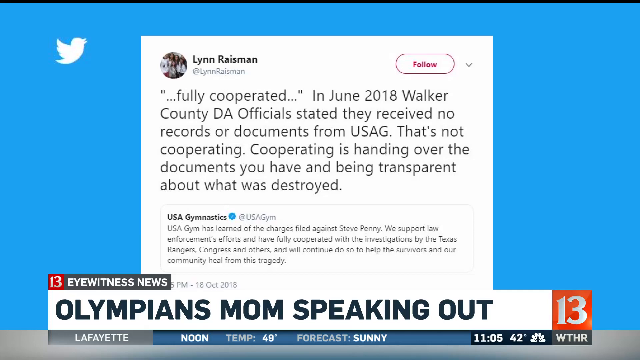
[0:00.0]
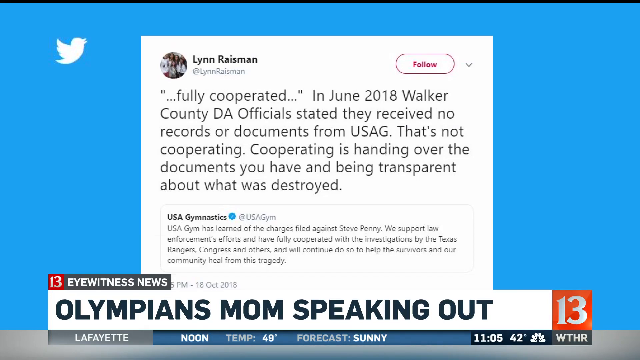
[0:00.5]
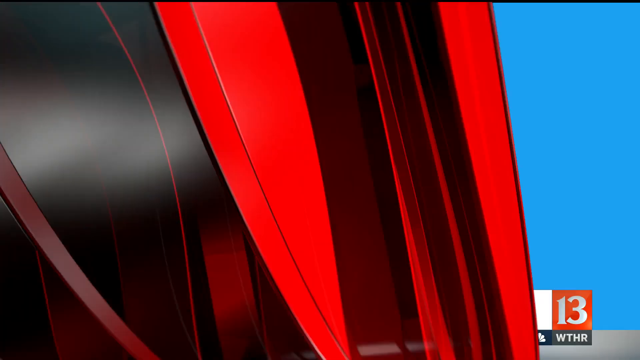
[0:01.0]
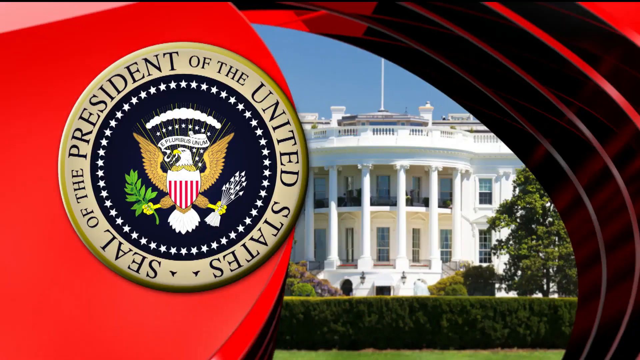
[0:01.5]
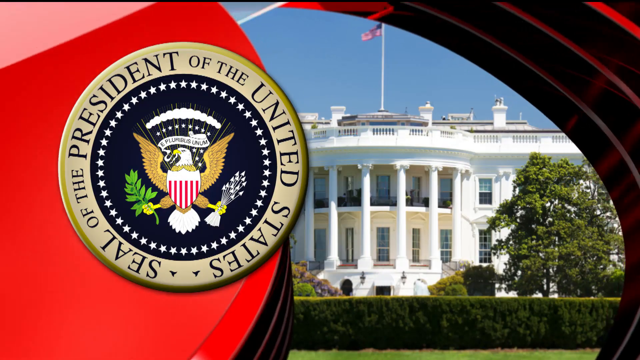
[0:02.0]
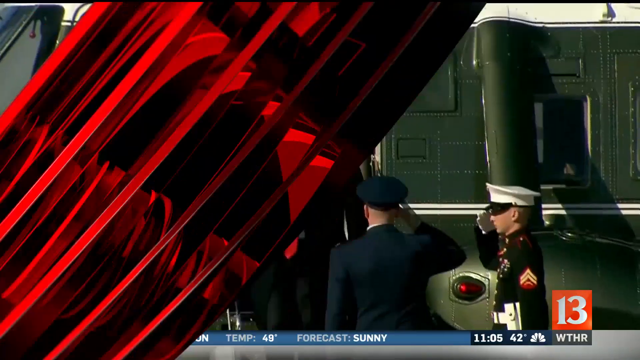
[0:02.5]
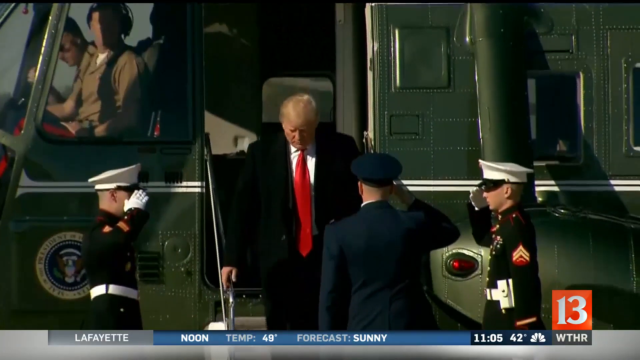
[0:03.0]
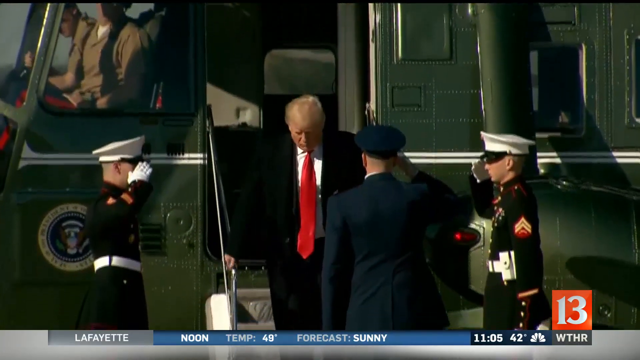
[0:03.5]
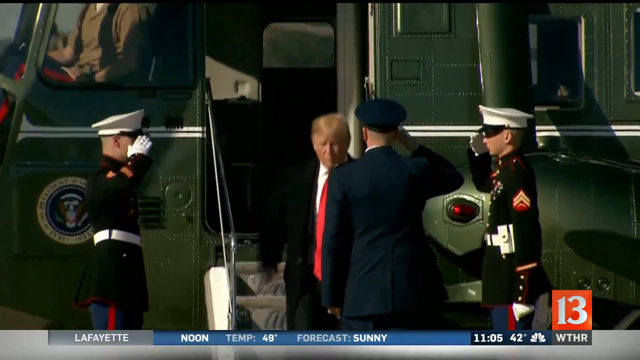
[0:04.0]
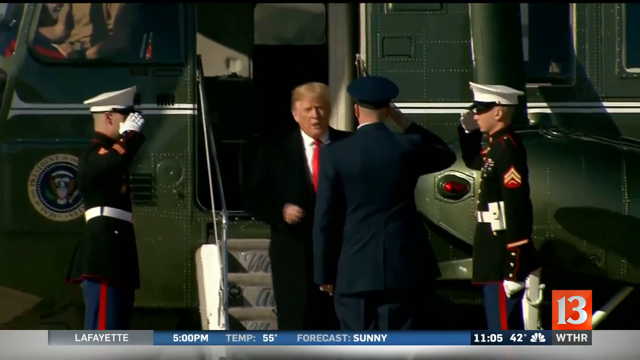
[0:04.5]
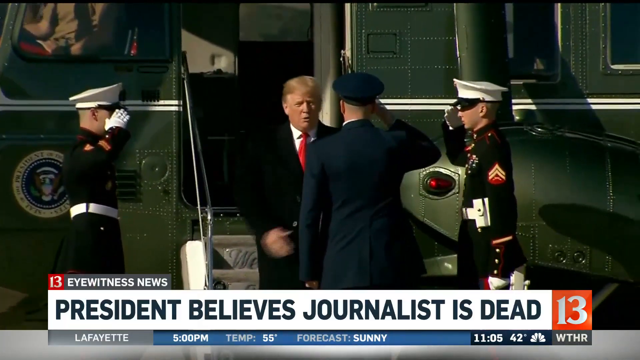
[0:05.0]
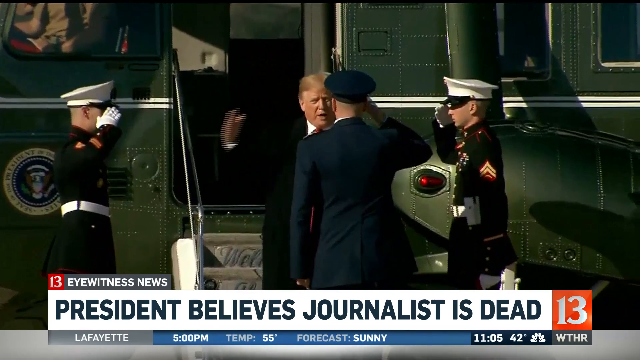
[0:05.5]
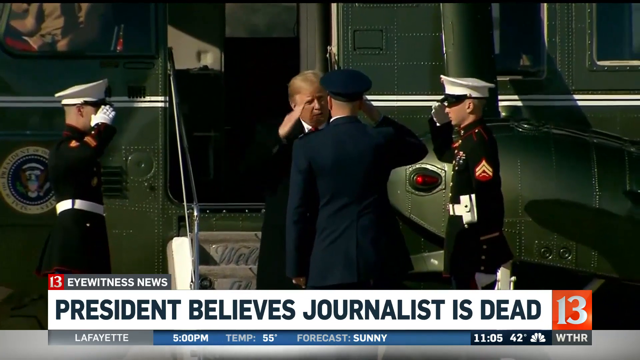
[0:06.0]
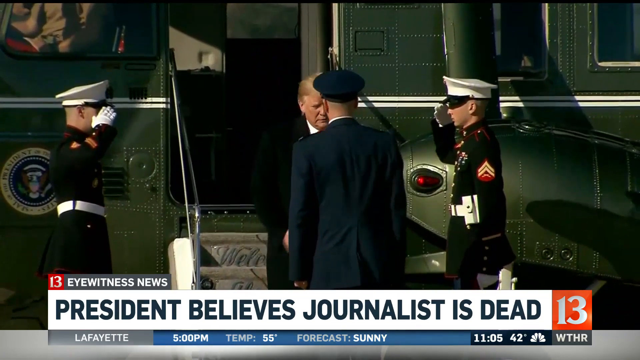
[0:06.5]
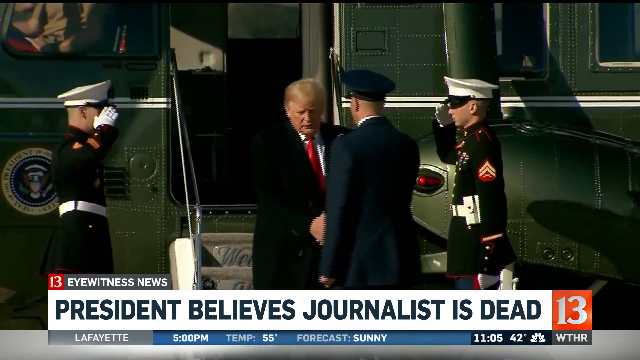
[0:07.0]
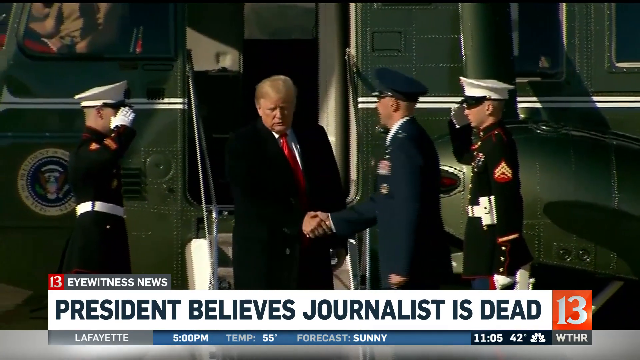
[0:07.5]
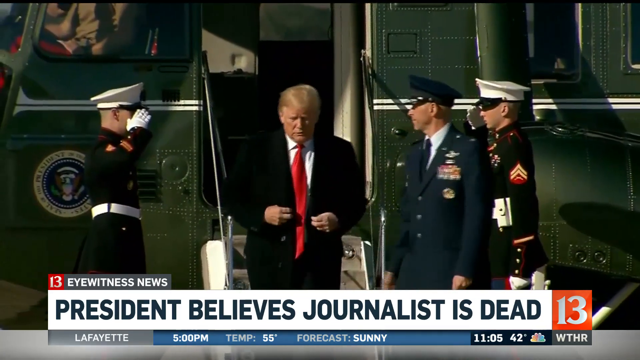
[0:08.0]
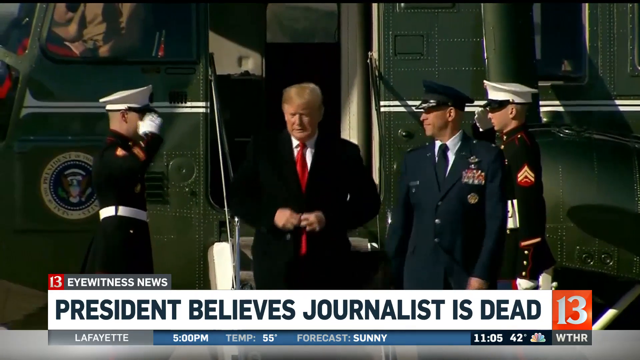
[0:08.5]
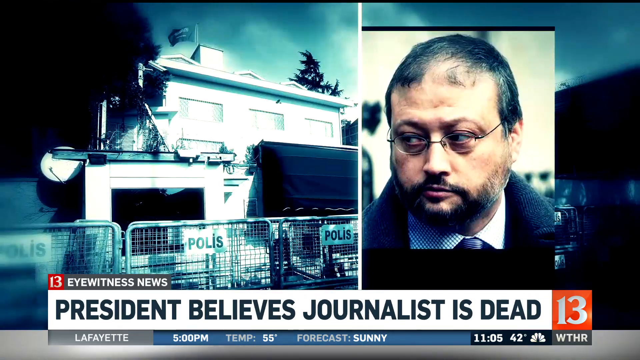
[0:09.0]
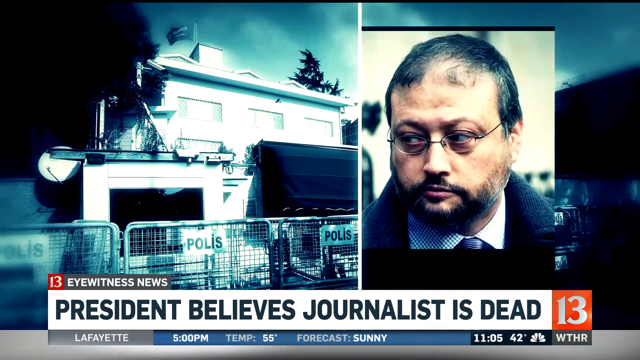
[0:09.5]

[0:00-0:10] A caption on the screen reads "Olympian's mom speaking out," and above it the screen shows that this is from 13 Eyewitness News. A tweet from a woman named Lynn Raisman is displayed. The broadcast then transitions to a different video showing President Donald Trump exiting an aircraft; as he walks down the steps, three military servicemen salute him. The title caption for this news segment reads "President believes journalist is dead." The next screen shows a picture of a tan-skinned man with glasses.